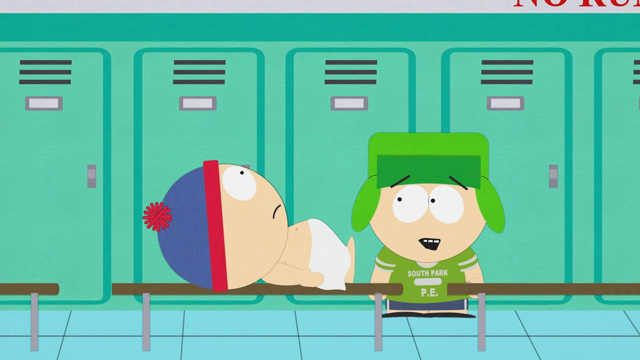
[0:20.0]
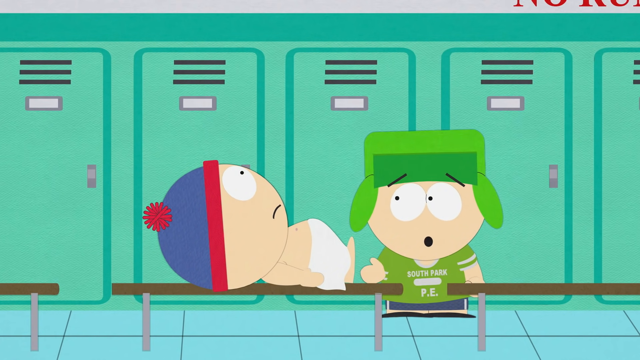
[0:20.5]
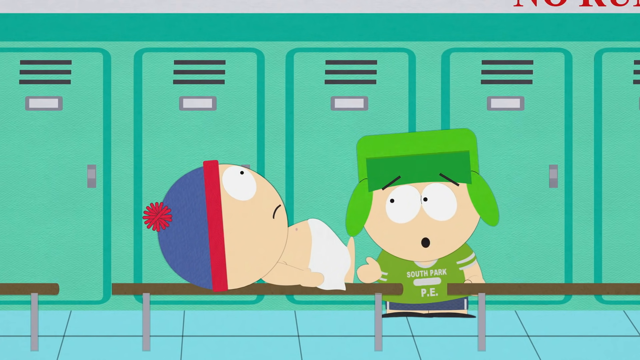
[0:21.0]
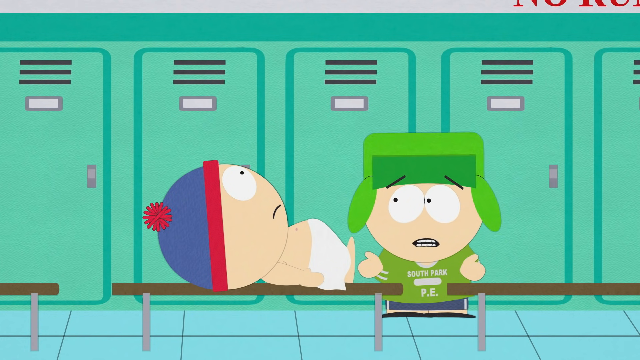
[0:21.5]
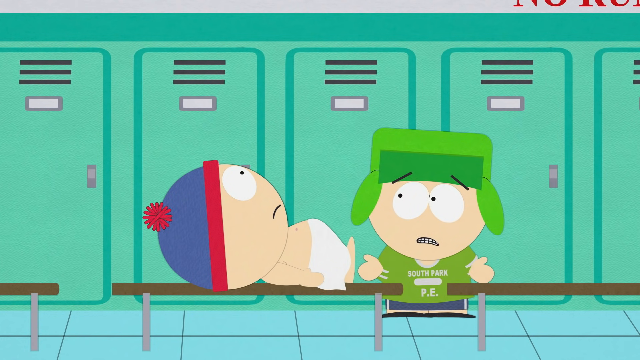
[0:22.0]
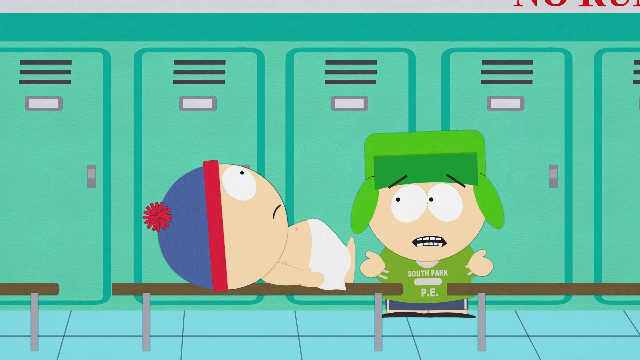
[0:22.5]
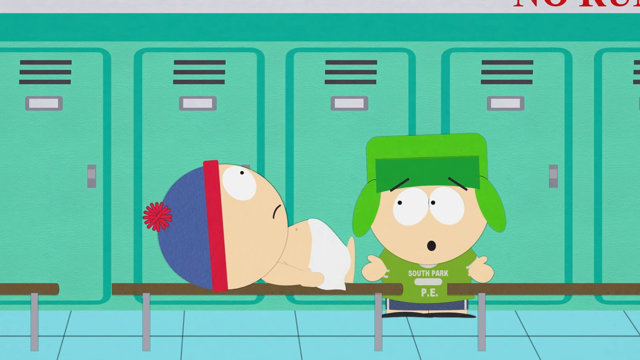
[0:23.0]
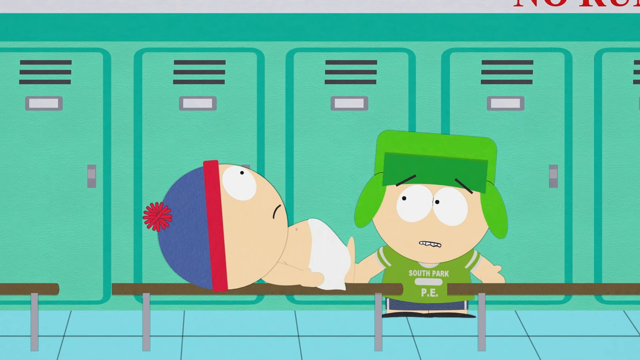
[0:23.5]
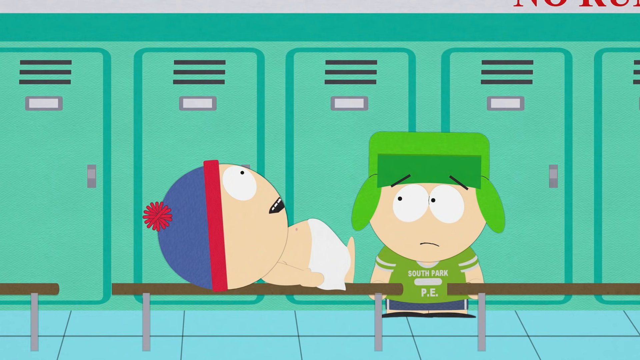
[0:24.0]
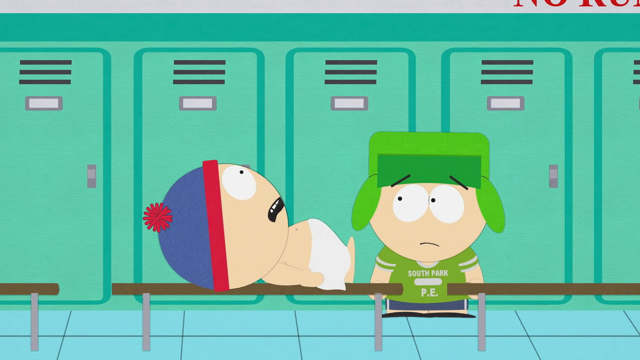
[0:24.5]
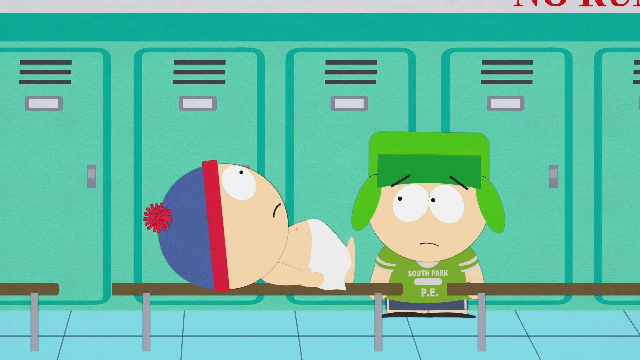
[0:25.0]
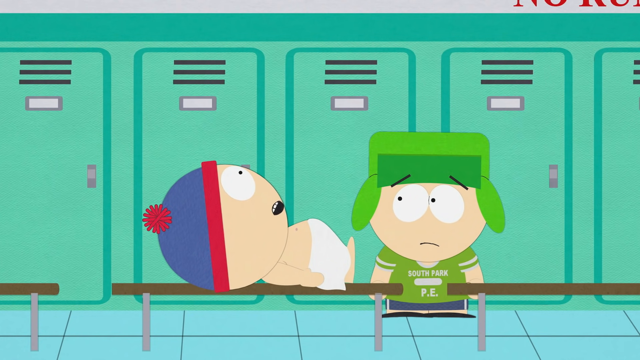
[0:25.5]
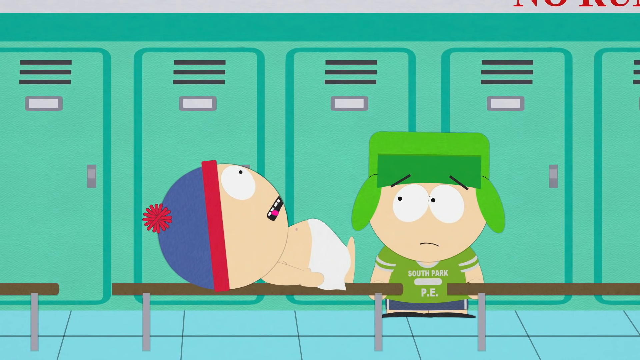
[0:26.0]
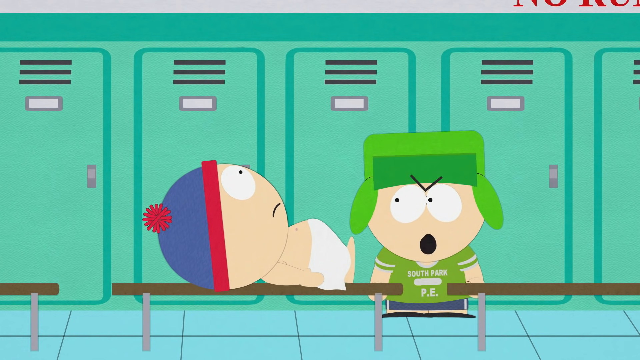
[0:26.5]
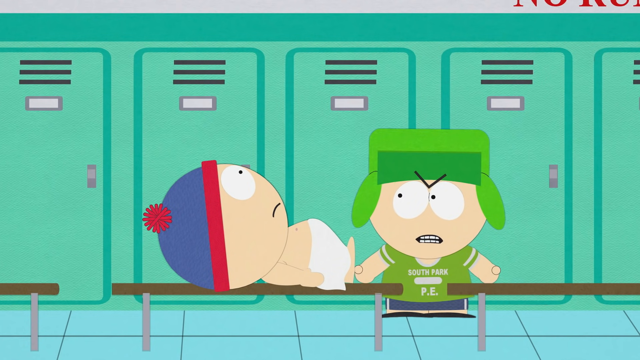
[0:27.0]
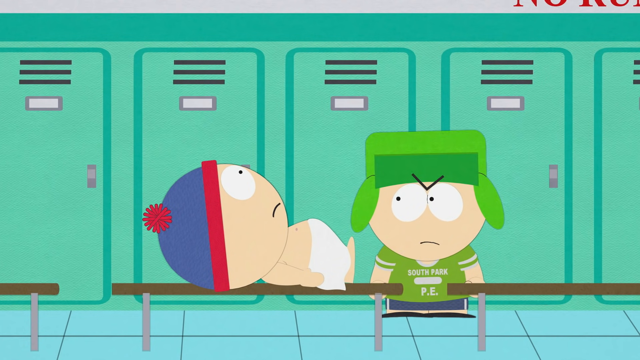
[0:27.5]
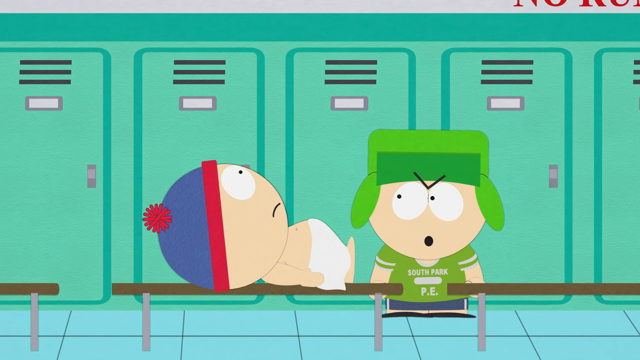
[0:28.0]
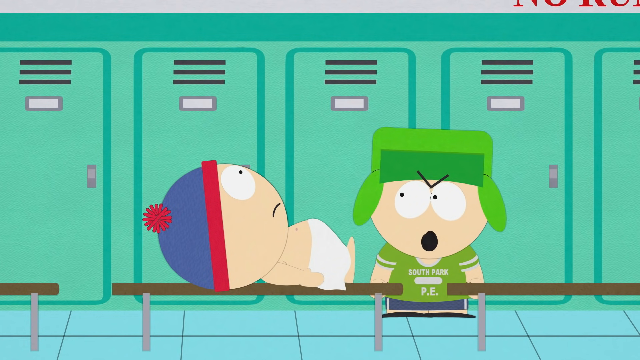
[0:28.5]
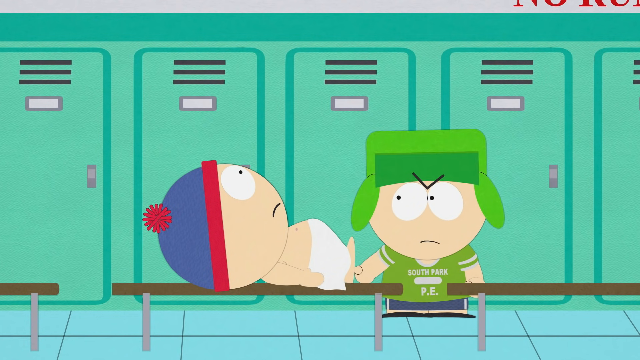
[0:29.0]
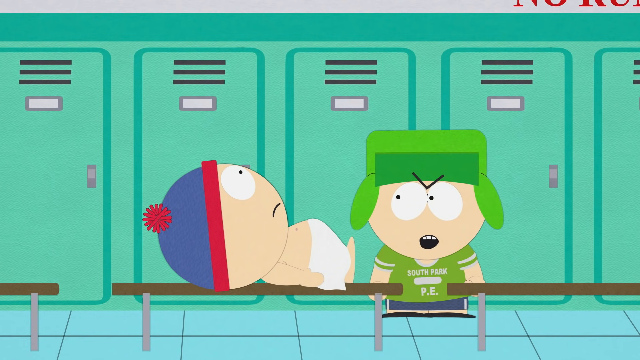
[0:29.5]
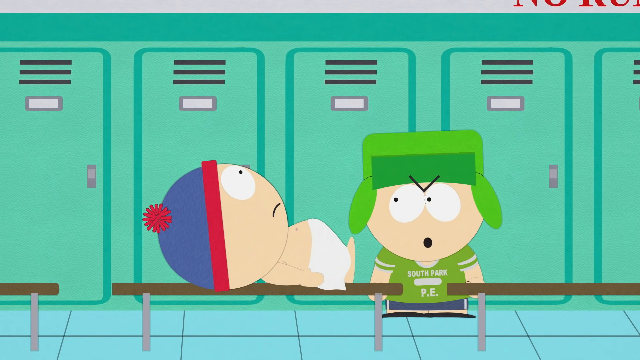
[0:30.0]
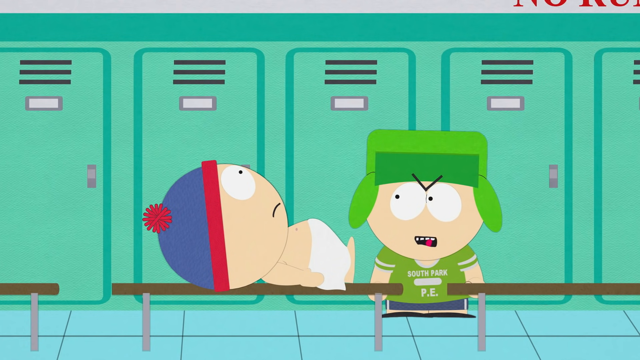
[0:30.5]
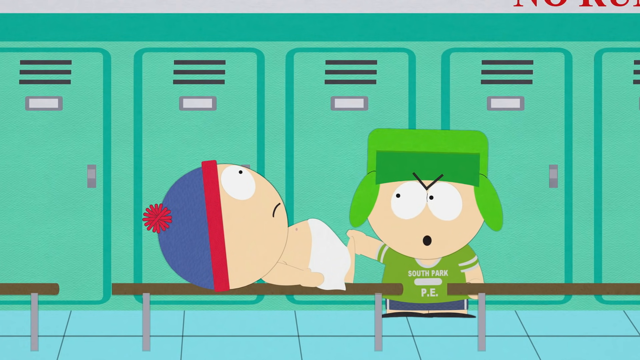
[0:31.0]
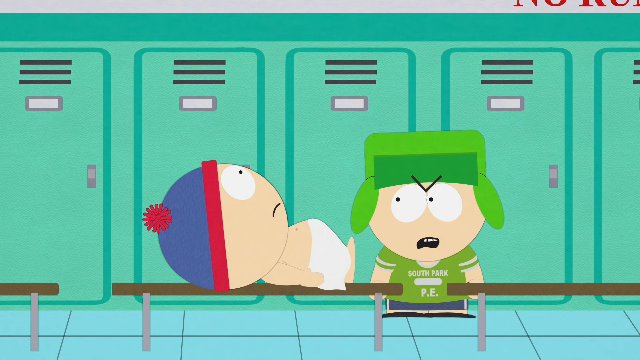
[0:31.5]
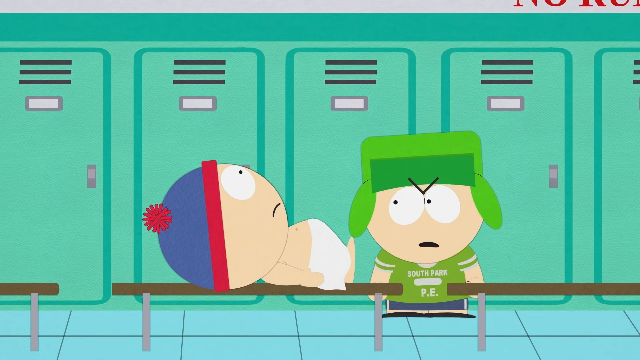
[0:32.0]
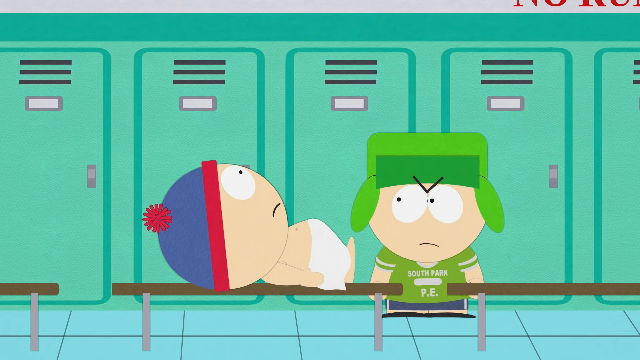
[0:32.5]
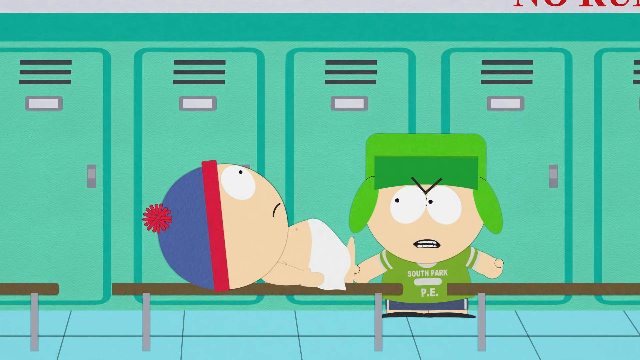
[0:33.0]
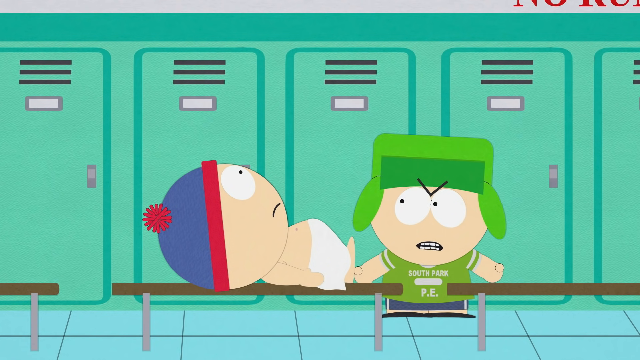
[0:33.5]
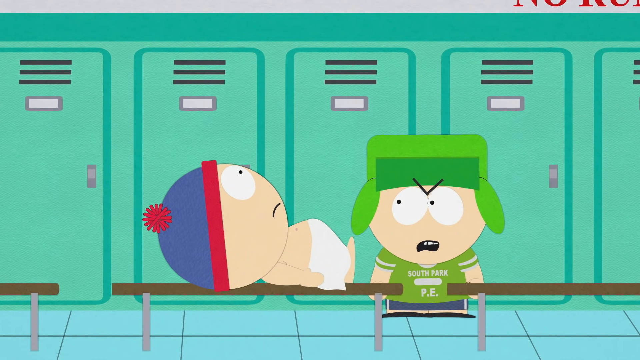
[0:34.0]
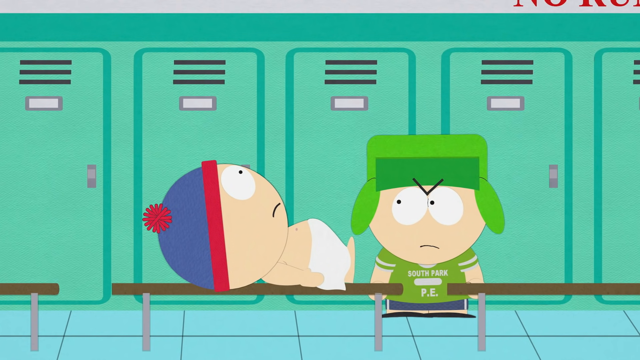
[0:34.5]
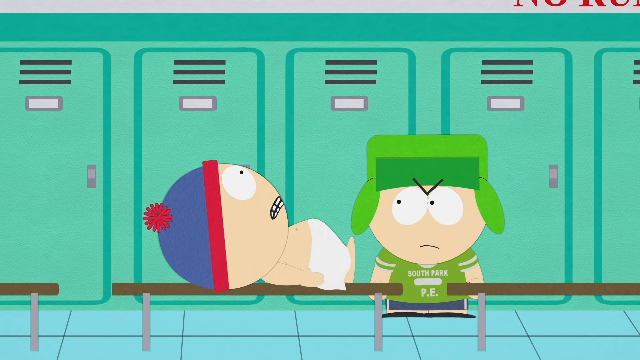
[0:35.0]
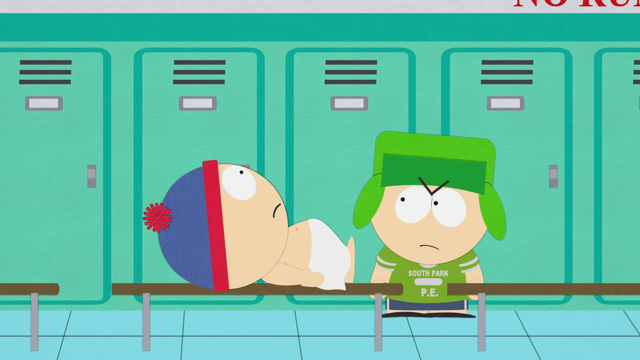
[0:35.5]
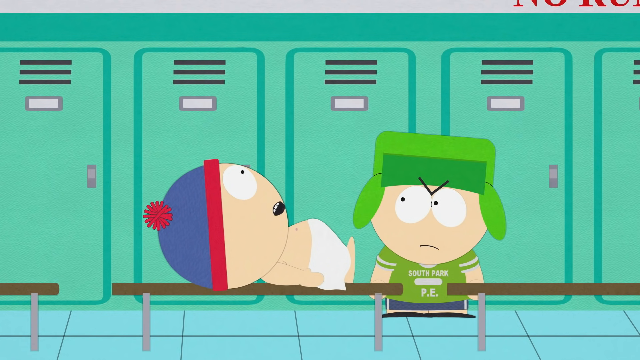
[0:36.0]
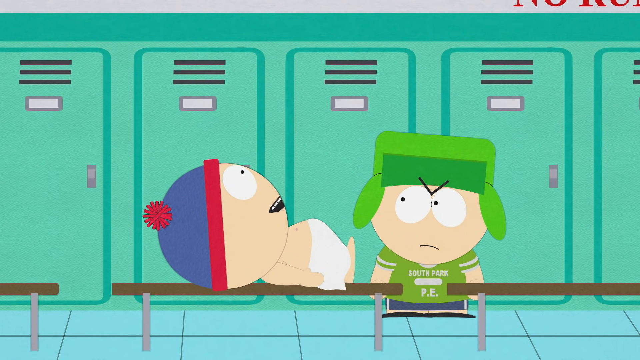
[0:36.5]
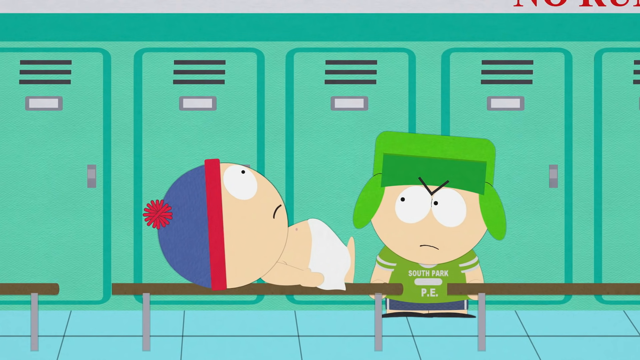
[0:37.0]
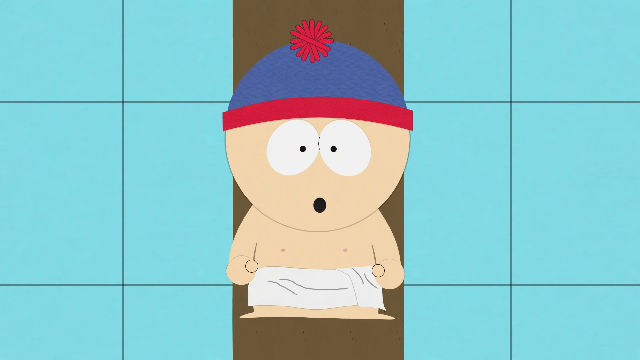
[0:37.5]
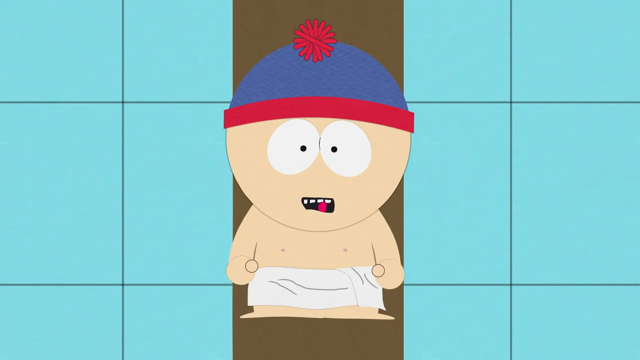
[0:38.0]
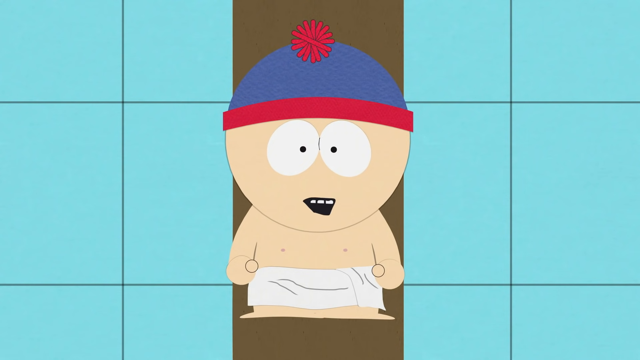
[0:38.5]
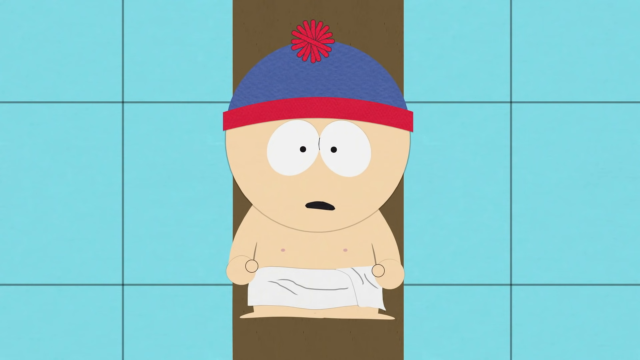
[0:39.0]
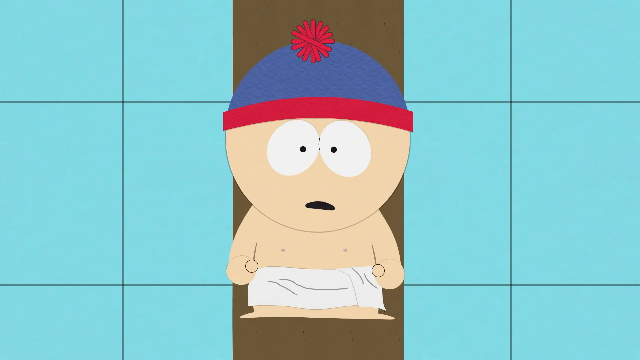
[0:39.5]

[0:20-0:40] Kyle is standing in the locker room while Stan, wearing a towel, lies on his back on one of the benches. It looks like Kyle is cussing him out while Stan just stares up at the ceiling. Kyle wears his green jersey and his typical green hat. The lockers are sort of a blue turquoise, the floors are tiled, and there are some benches. The scene then cuts to one of the goth kids, whose hair is dyed sort of red and black. He is dressed in all black and appears to be wearing a grayish sweater, and he is sitting down on a curb or in front of a house or something similar.